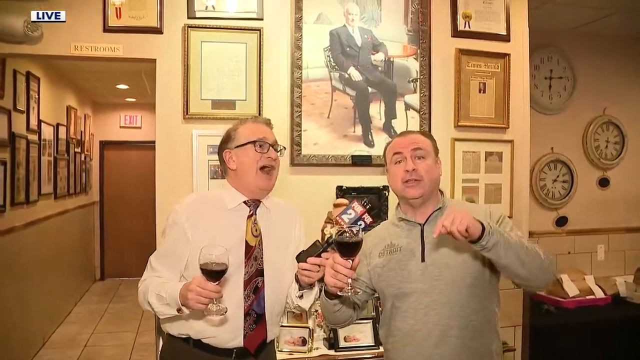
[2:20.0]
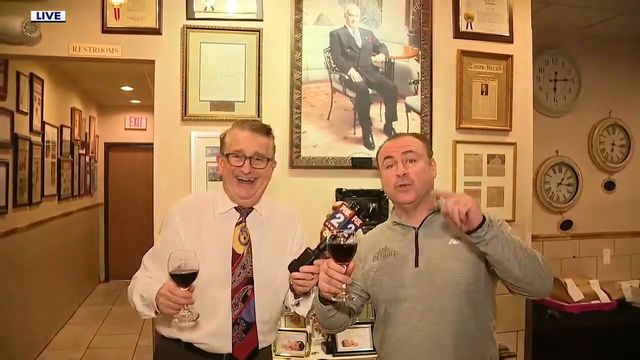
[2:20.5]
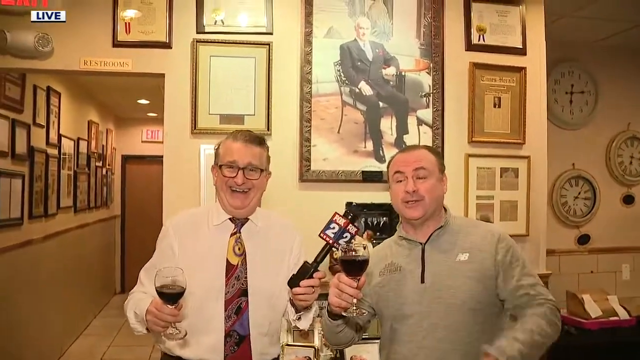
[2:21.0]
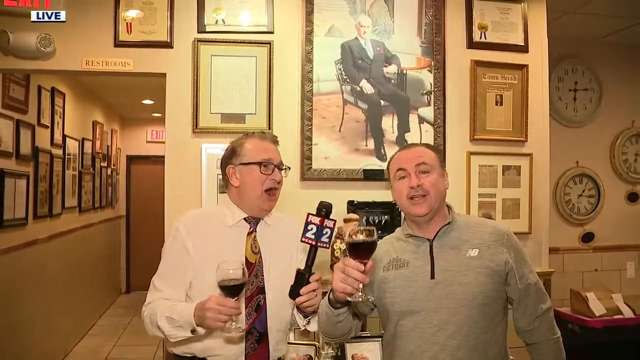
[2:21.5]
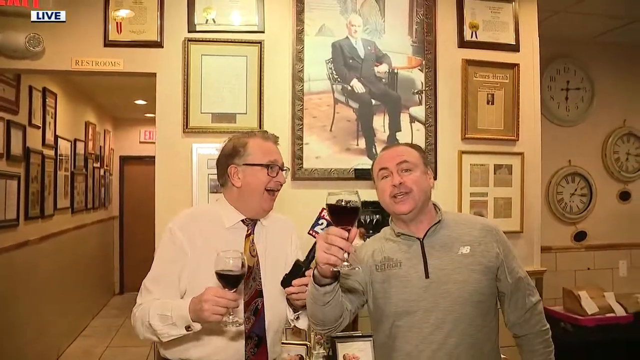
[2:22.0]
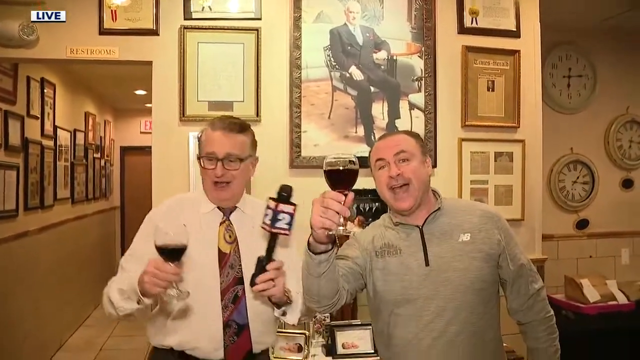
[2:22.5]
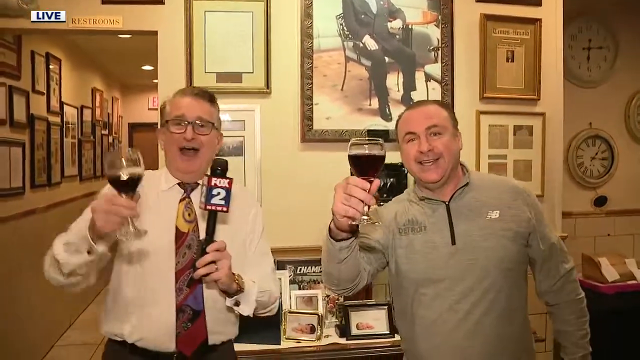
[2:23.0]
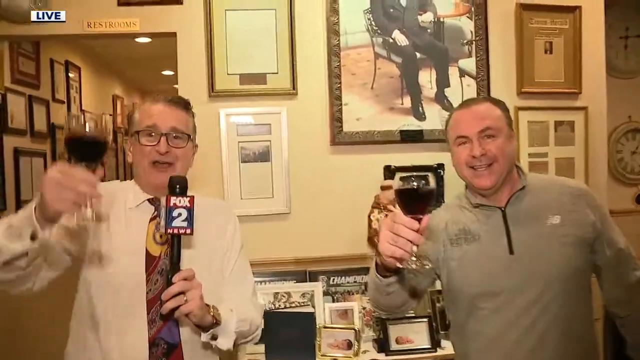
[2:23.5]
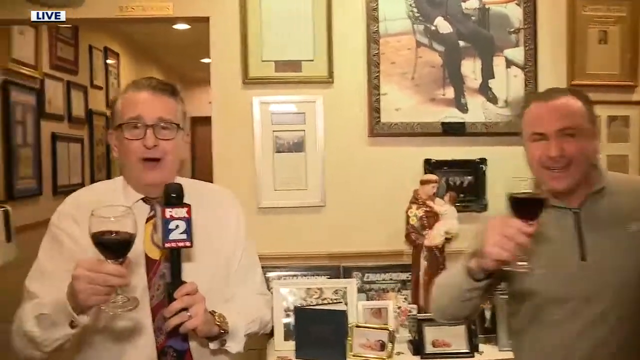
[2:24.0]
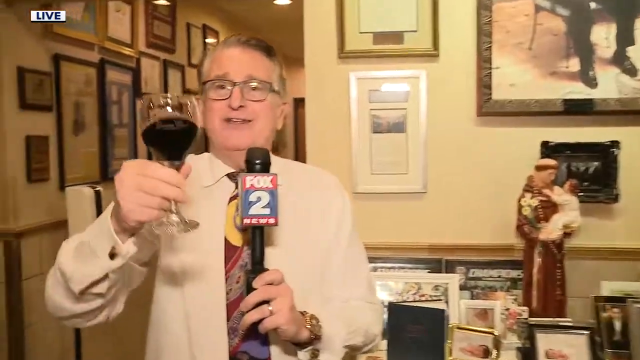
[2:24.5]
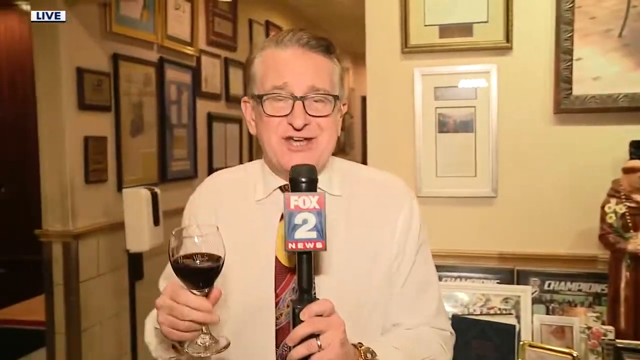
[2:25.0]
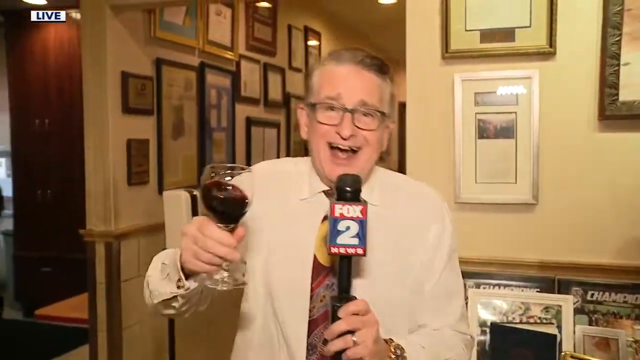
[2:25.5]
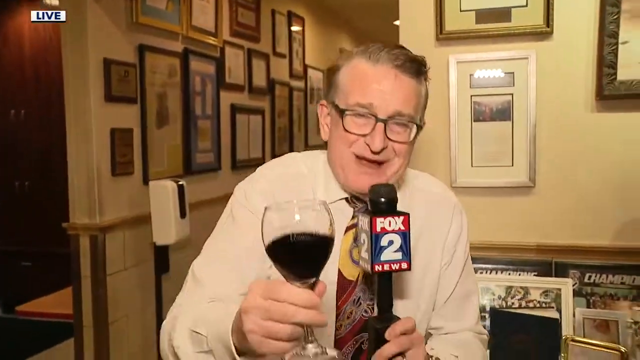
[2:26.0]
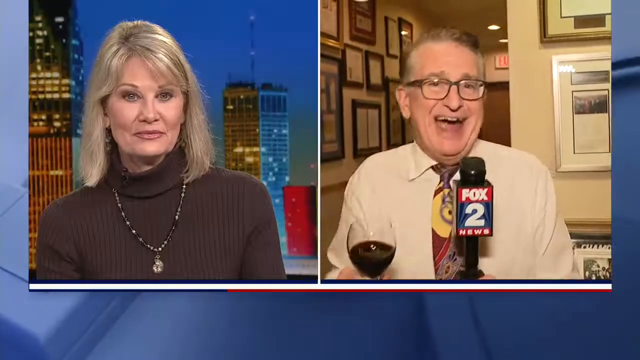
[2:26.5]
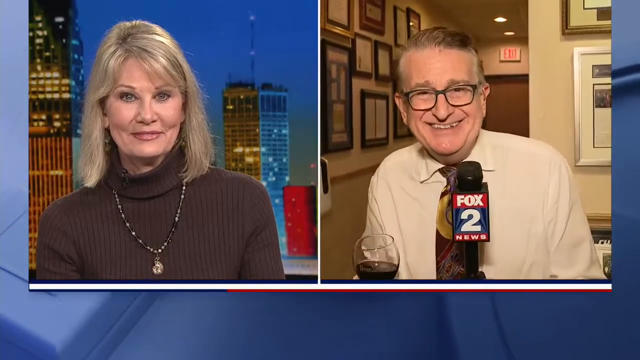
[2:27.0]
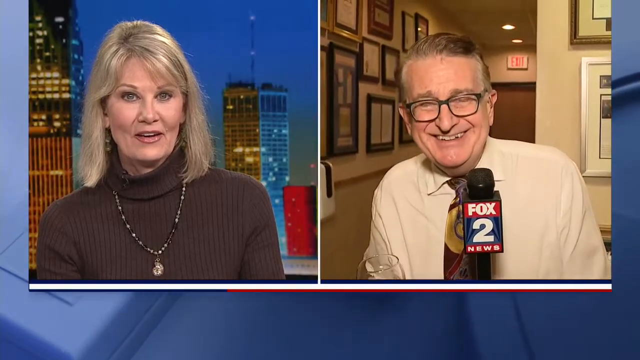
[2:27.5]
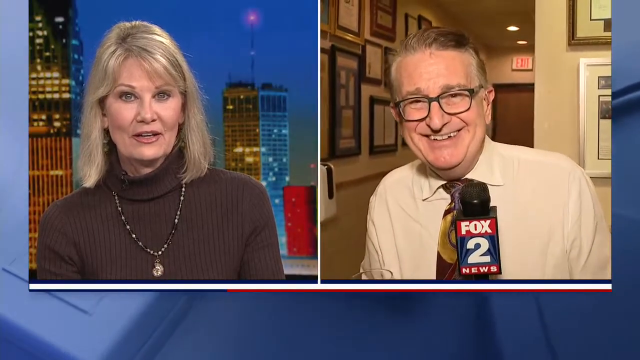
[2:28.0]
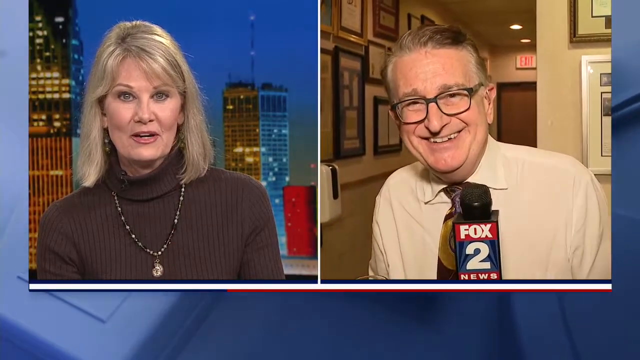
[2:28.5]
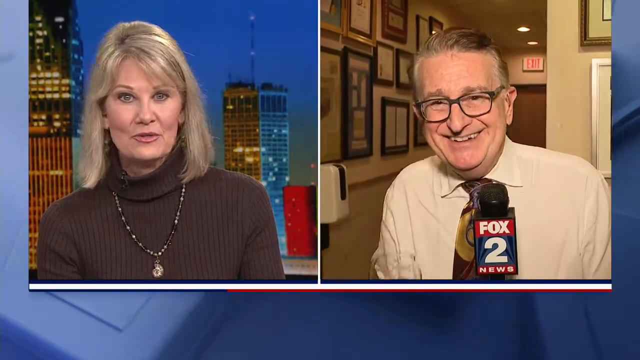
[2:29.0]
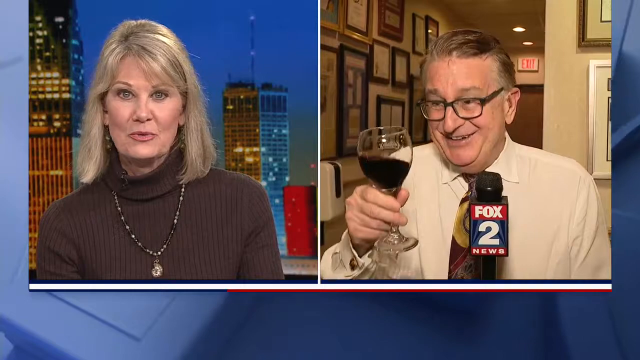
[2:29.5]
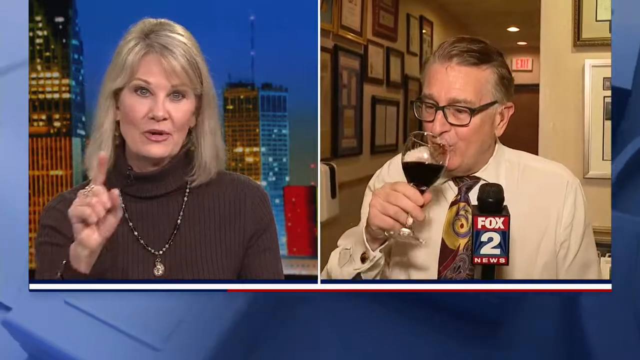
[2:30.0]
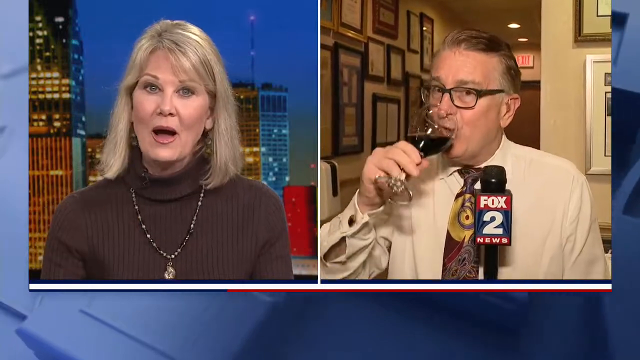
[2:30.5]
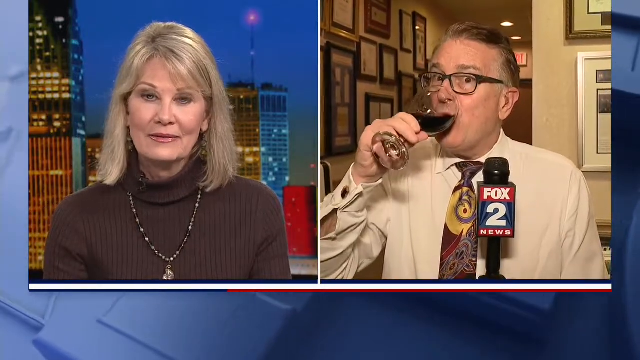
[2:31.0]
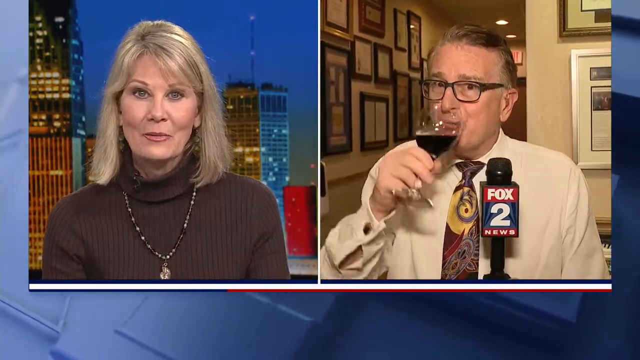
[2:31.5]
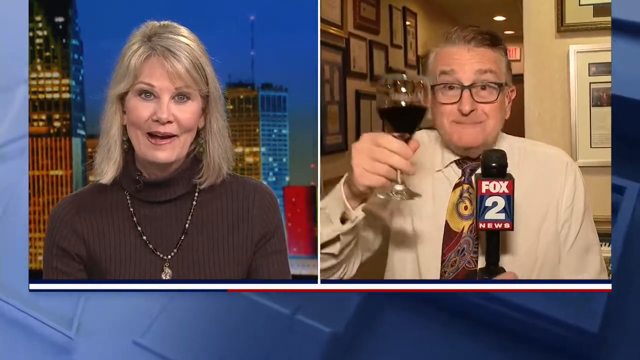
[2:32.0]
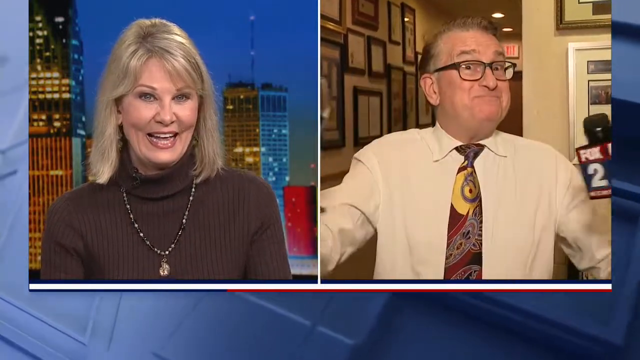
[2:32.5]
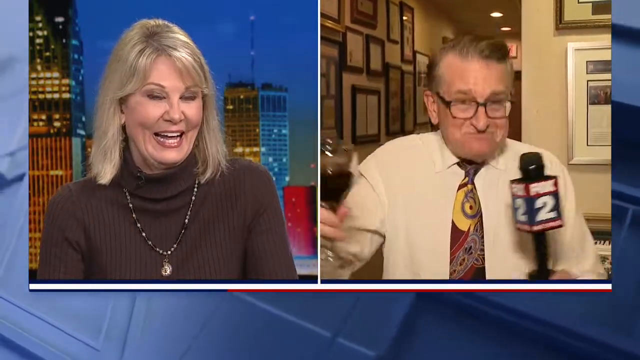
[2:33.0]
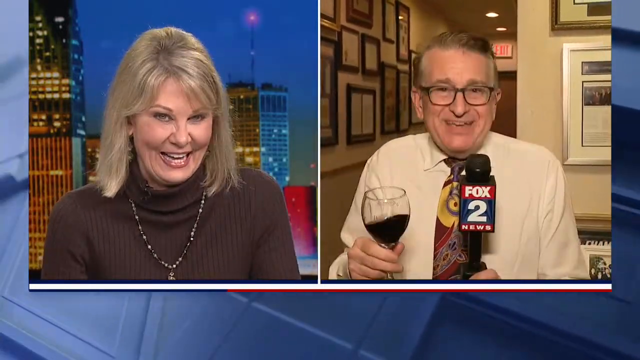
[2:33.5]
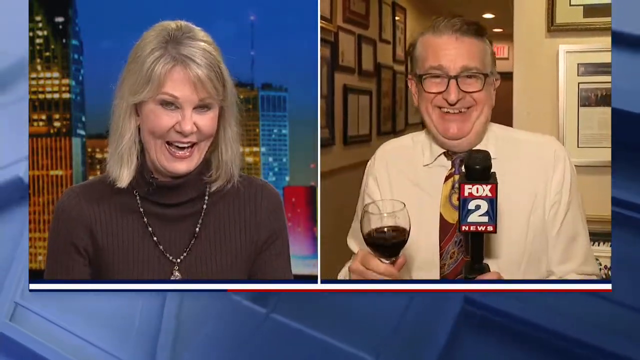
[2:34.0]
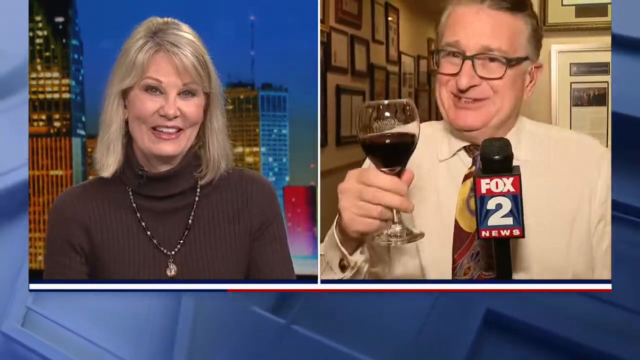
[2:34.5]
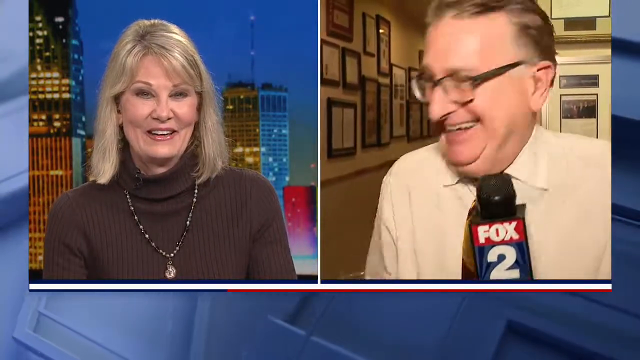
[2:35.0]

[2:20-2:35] The owner salutes. Both men raise their glasses in a toast, and the news reporter does it several more times. As he smiles, his teeth are kind of yellow and crooked. He finally takes a sip of wine, giggling and laughing. A female reporter at the station replies to him; she is older, with short blonde hair, a brown turtleneck sweater and a white necklace, and the background behind her is an image of the city landscape at night. She giggles and laughs as he talks, and he looks like he is really enjoying himself. His tie is shiny and maroon with a gold spiral pattern, plus some purple leafy-shaped patterns with outlines.